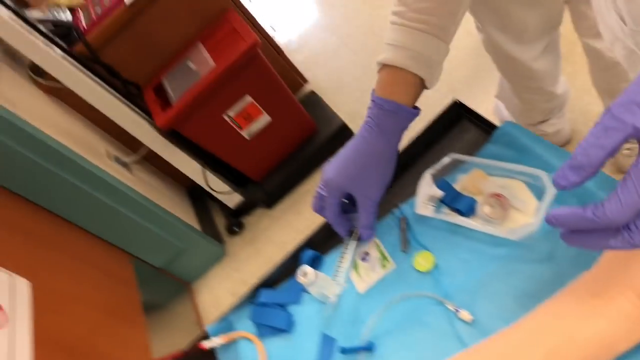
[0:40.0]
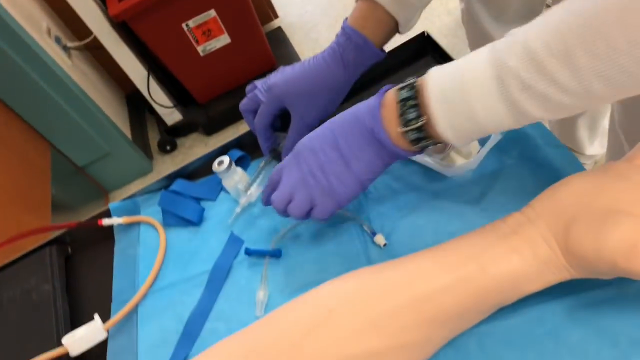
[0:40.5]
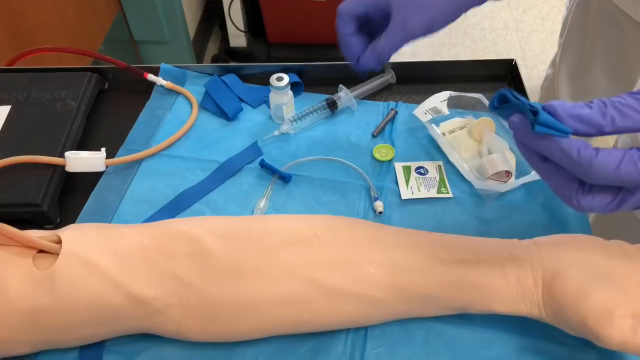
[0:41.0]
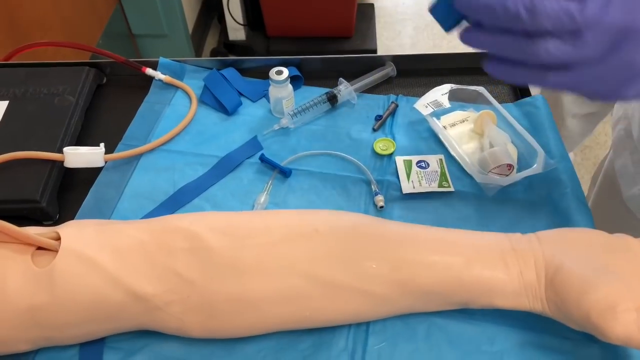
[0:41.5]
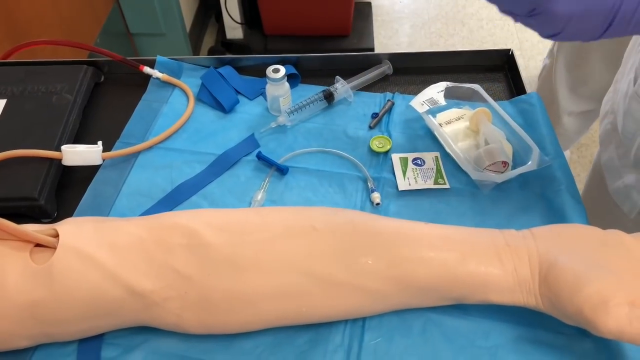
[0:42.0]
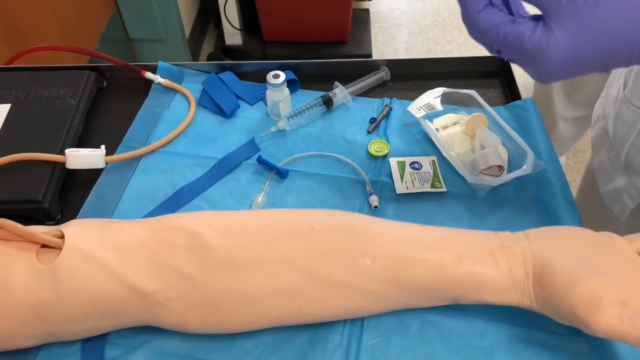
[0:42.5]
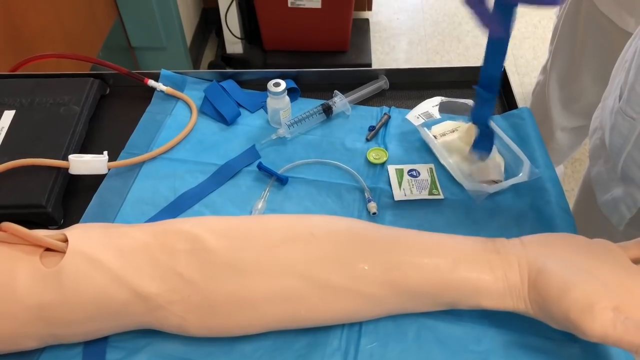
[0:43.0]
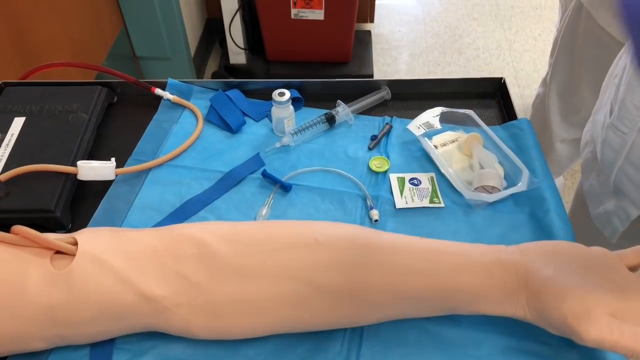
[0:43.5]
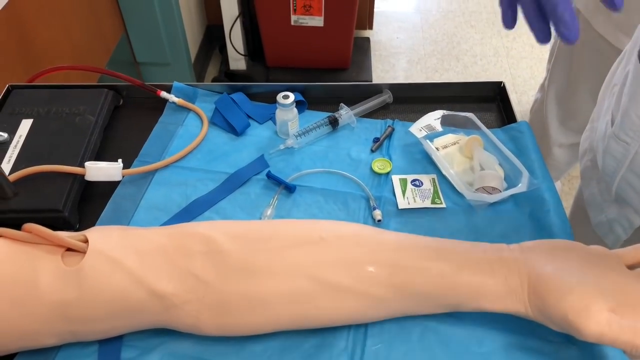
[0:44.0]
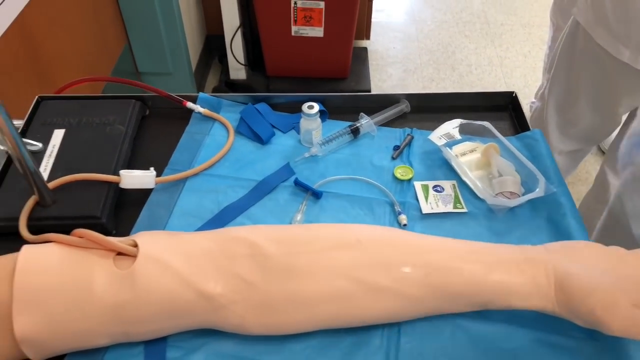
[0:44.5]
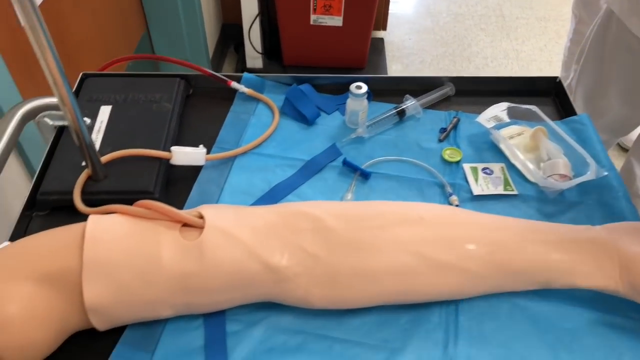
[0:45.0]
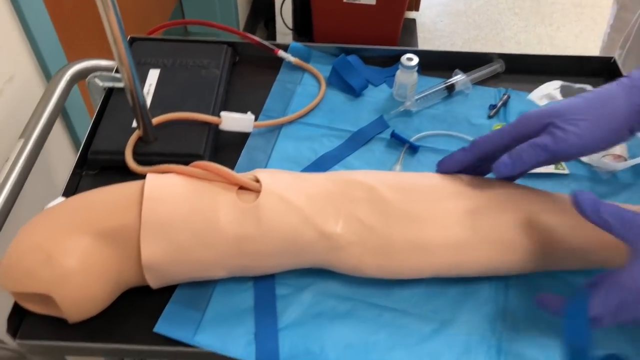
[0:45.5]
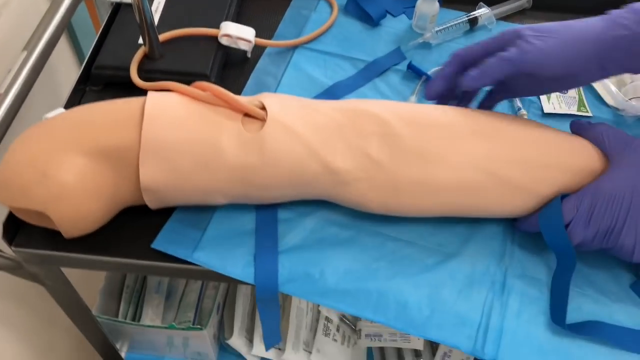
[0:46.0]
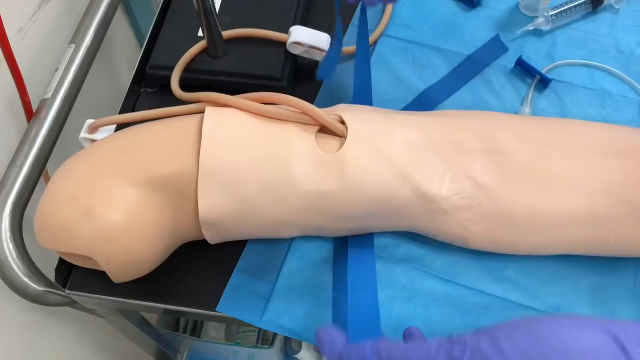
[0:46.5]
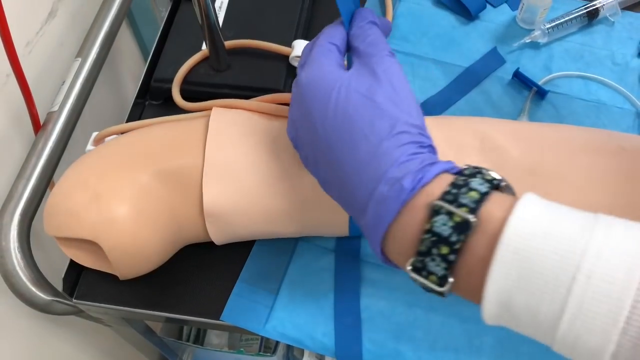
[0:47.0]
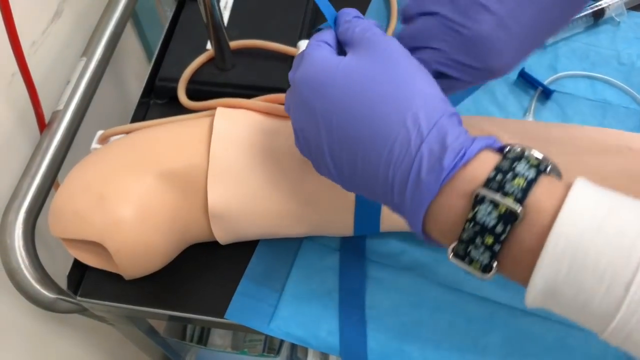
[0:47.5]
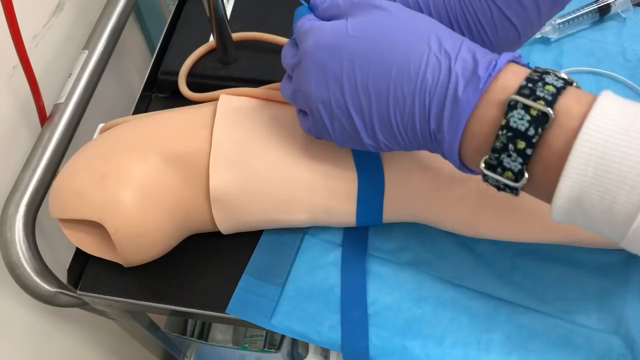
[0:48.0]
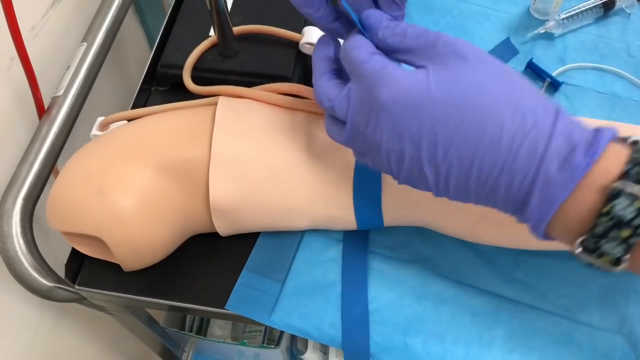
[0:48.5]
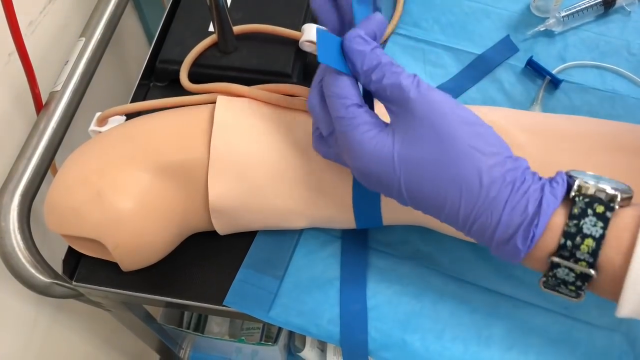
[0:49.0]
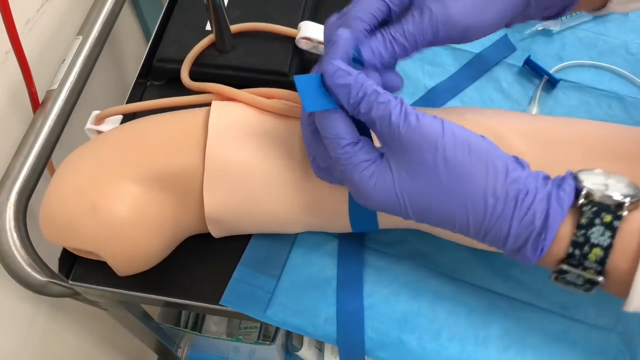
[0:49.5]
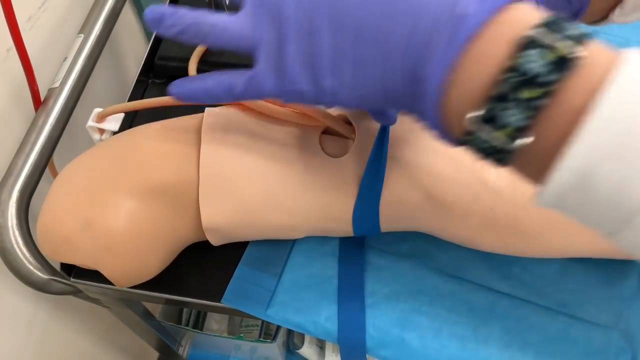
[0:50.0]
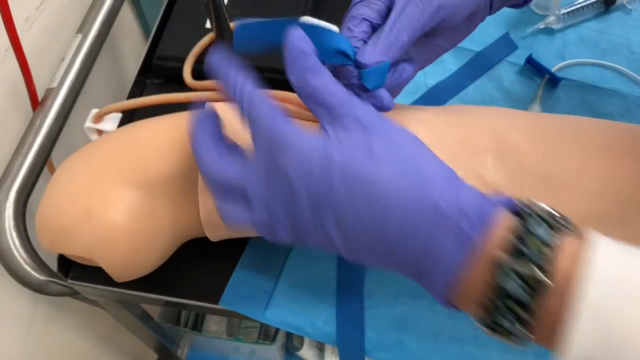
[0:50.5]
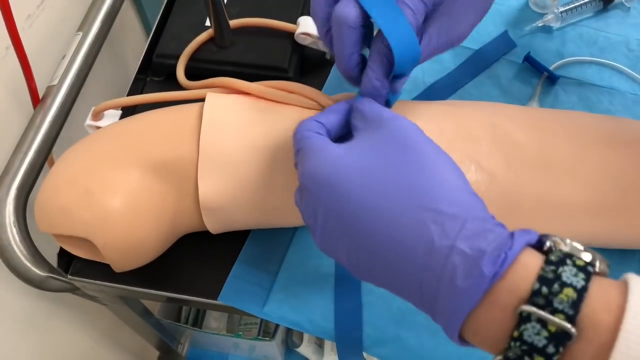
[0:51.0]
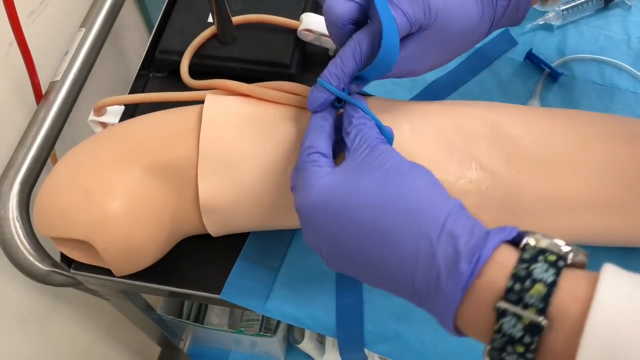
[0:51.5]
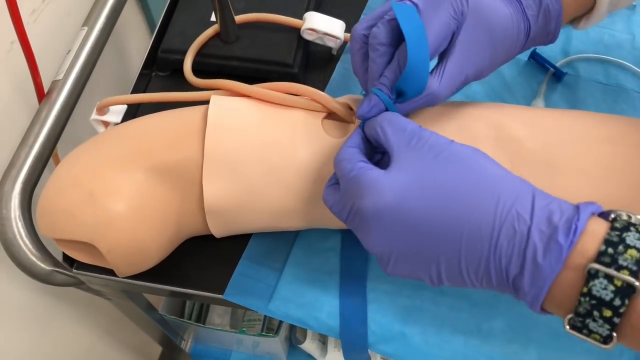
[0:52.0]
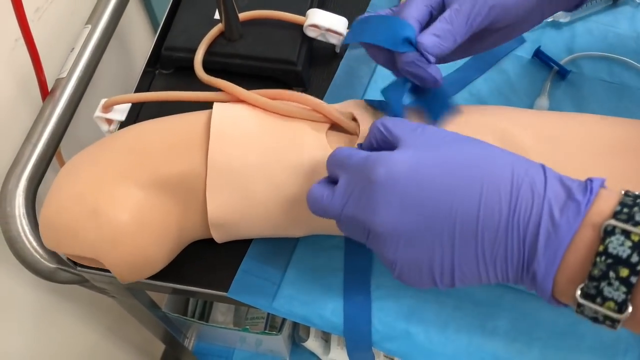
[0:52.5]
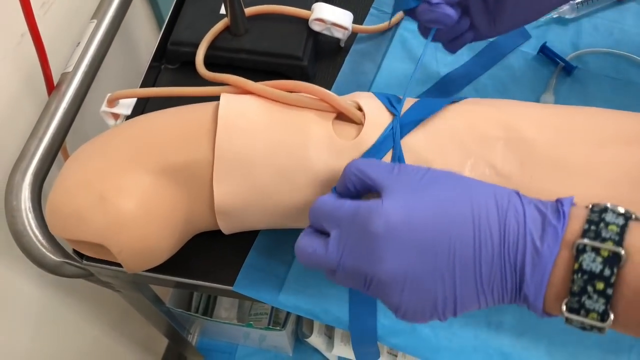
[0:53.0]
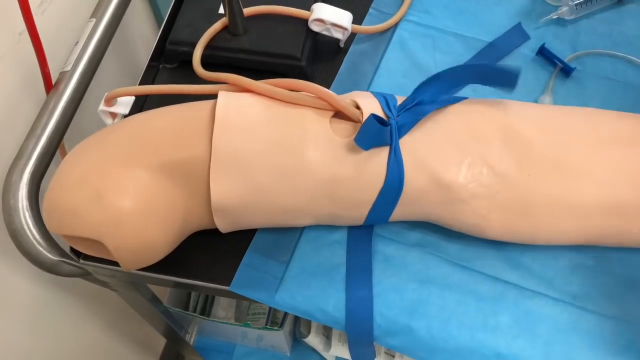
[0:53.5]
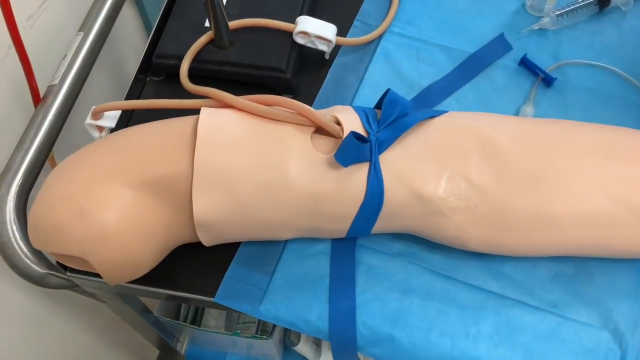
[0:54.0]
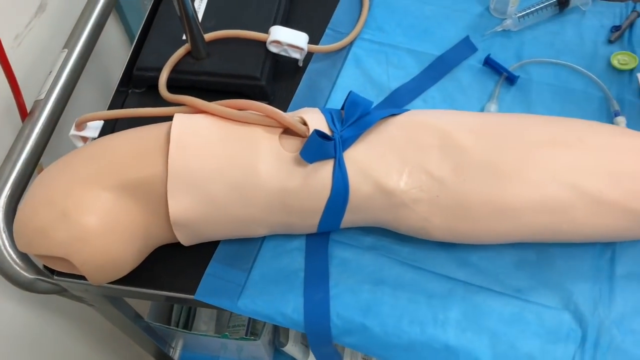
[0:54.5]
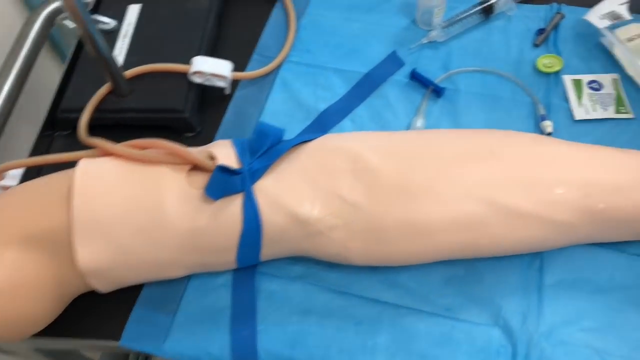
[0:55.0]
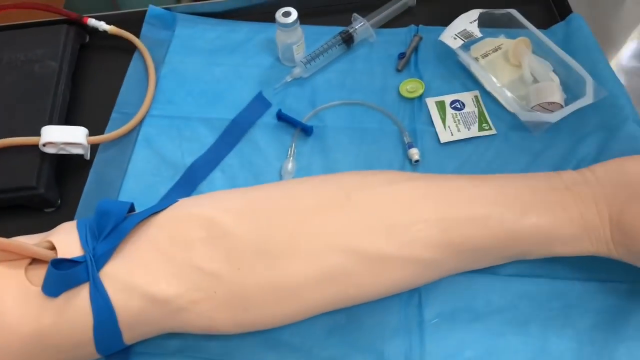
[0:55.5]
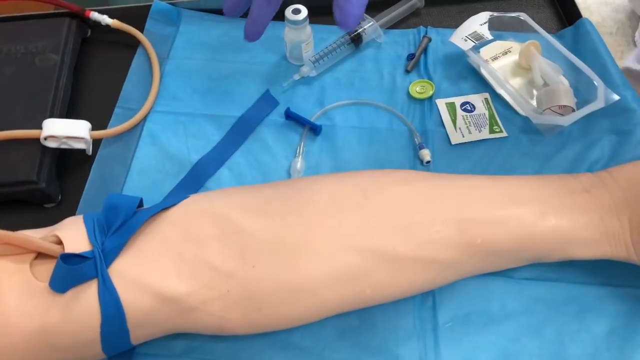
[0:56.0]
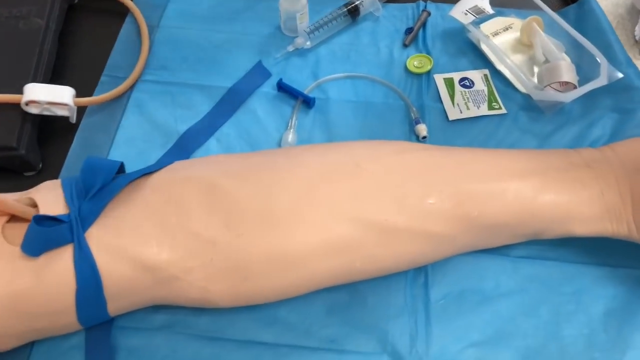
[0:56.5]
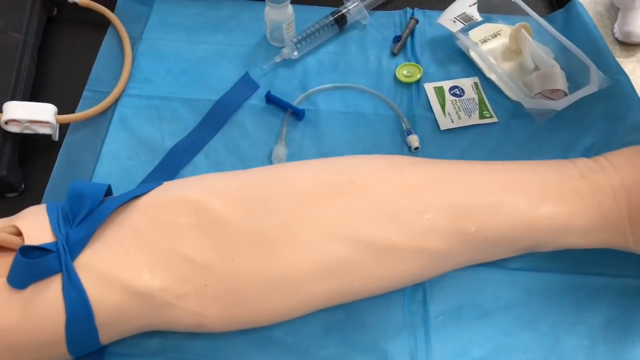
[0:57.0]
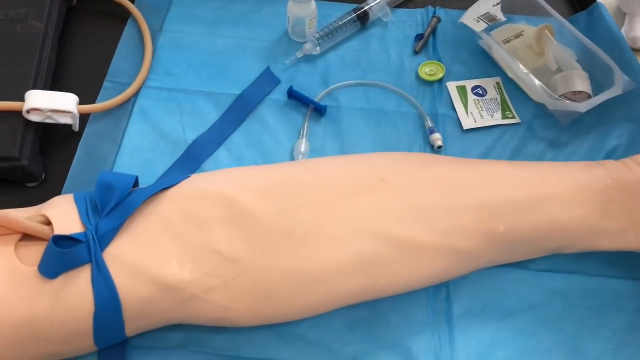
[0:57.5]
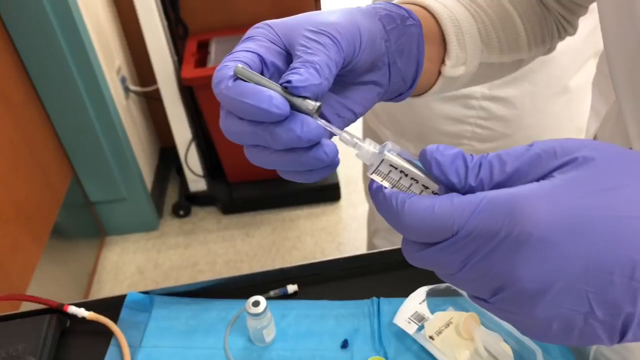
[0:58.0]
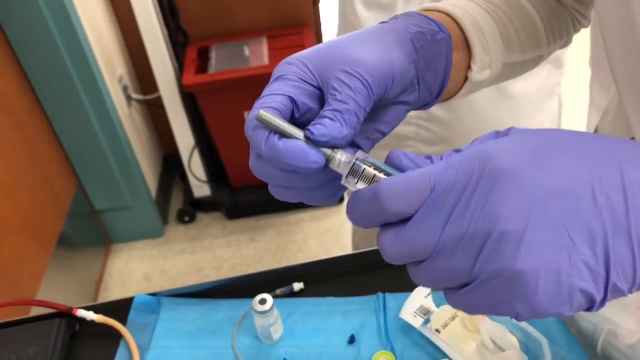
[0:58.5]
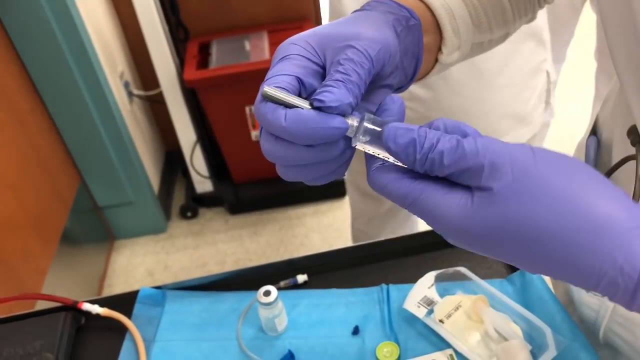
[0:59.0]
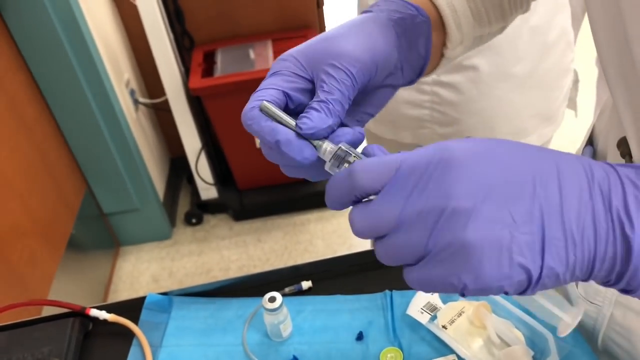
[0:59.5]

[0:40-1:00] Three medical professionals are in white medical gear. The active medical professional ties off the phlebotomy practice arm with the blue ribbon, wrapping it around the arm above the elbow: she crosses the ribbon, tucks one end underneath and pulls. She then takes the needle filled with clear liquid in her left hand, puts a cap on it with her right hand, and lays the needle back down onto the cart on top of the blue medical mat. She wears purple gloves that appear to be latex. The practice arm is laying on top of the metal cart on the blue medical mat, with its palm open and up, so the side opposite the elbow is exposed.